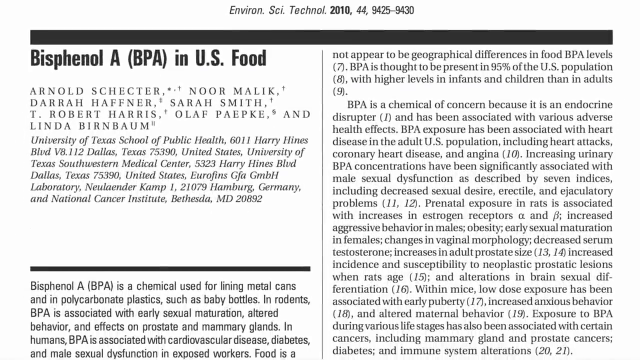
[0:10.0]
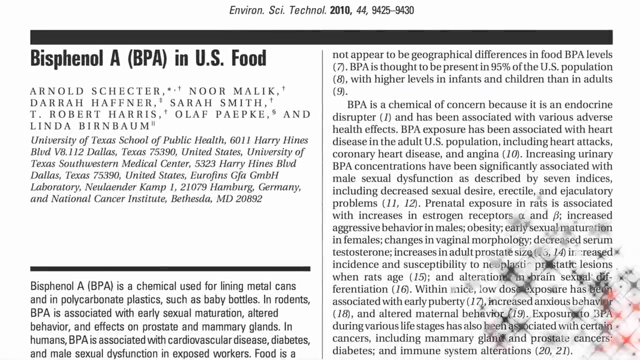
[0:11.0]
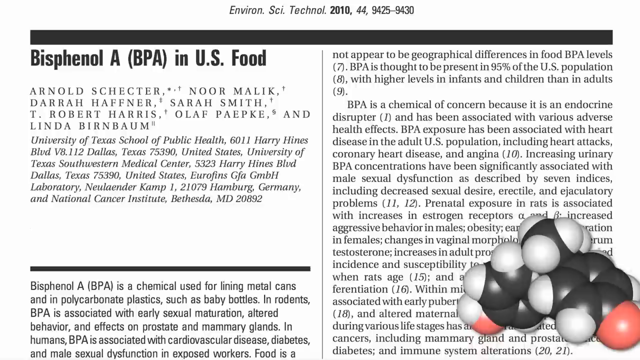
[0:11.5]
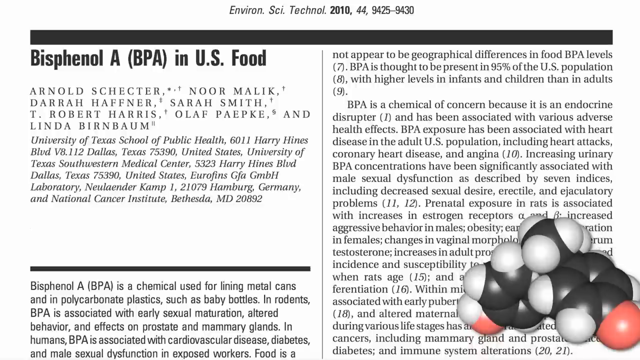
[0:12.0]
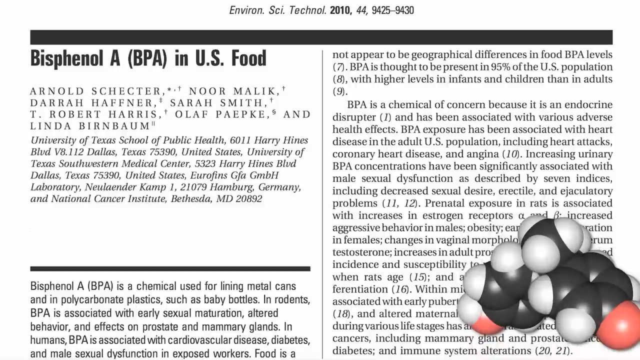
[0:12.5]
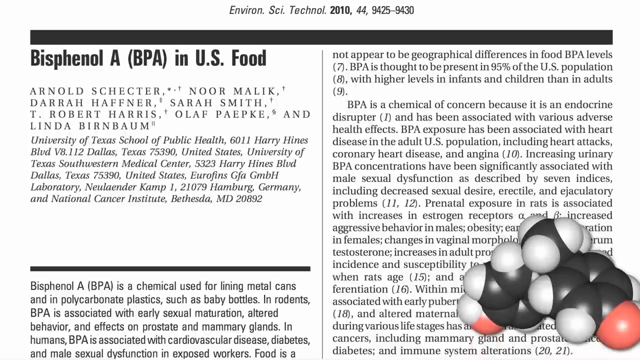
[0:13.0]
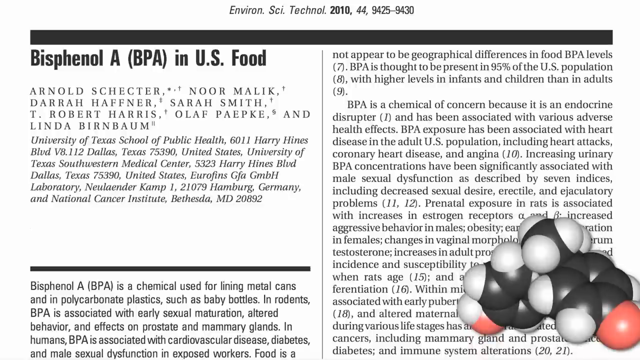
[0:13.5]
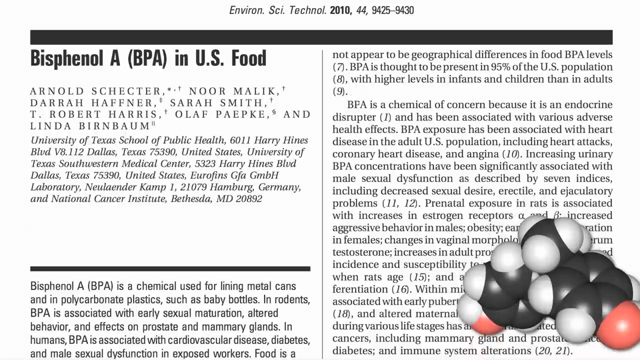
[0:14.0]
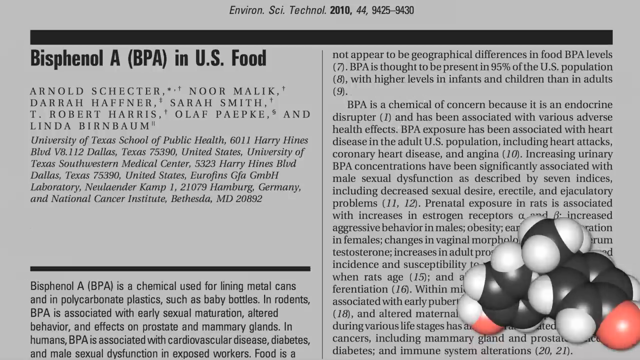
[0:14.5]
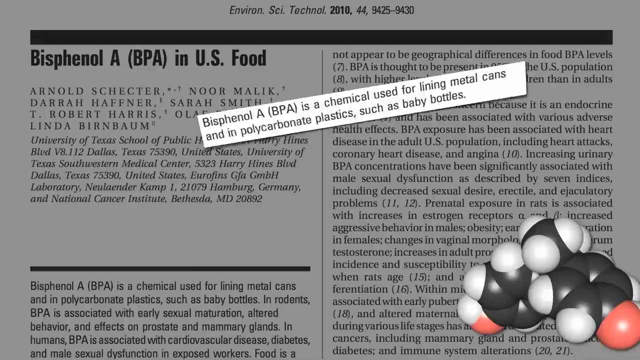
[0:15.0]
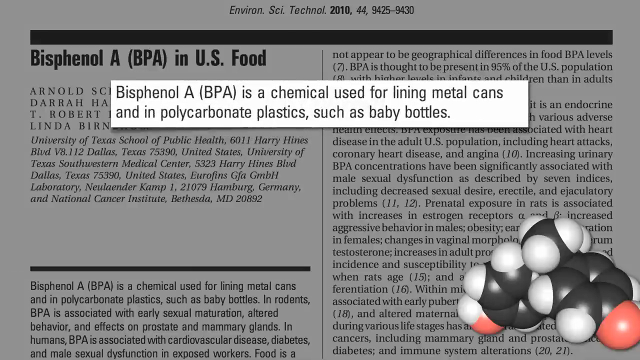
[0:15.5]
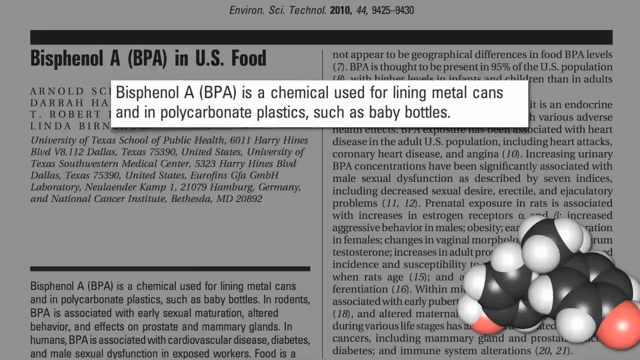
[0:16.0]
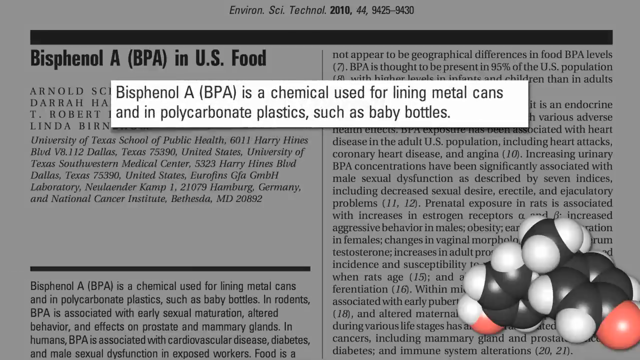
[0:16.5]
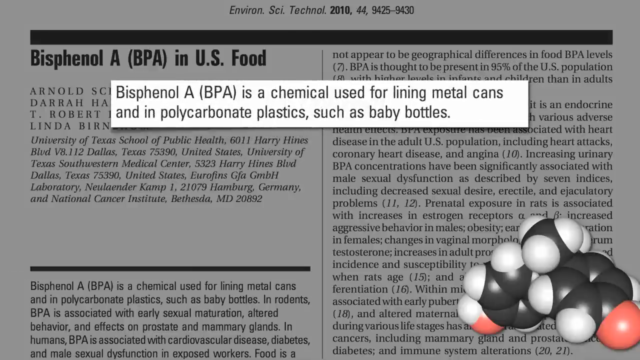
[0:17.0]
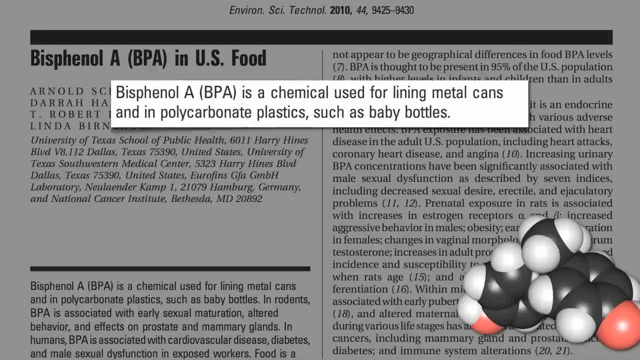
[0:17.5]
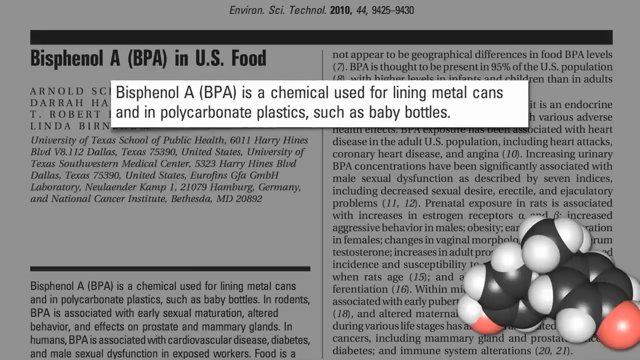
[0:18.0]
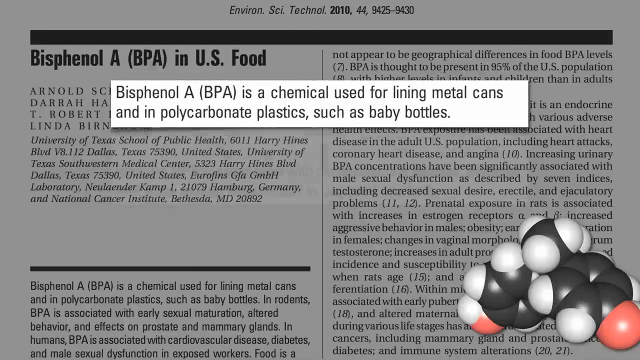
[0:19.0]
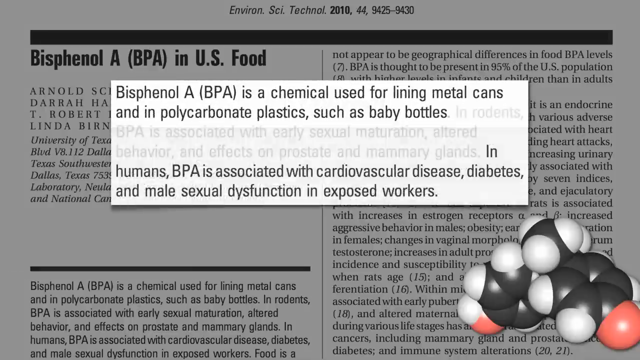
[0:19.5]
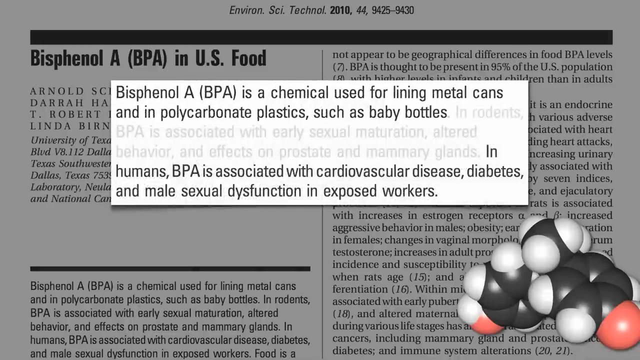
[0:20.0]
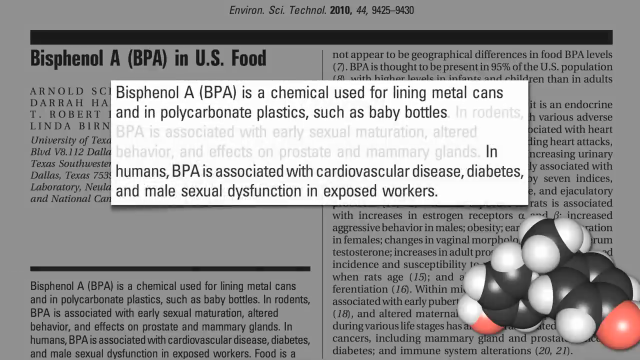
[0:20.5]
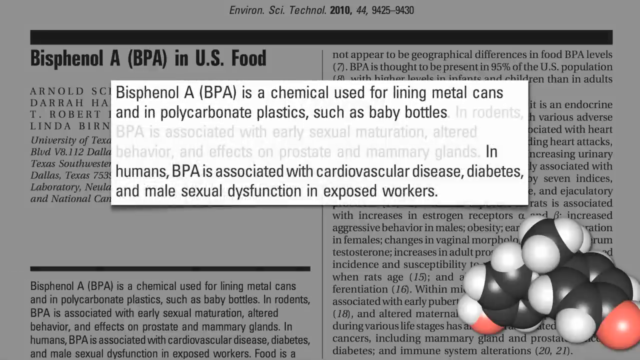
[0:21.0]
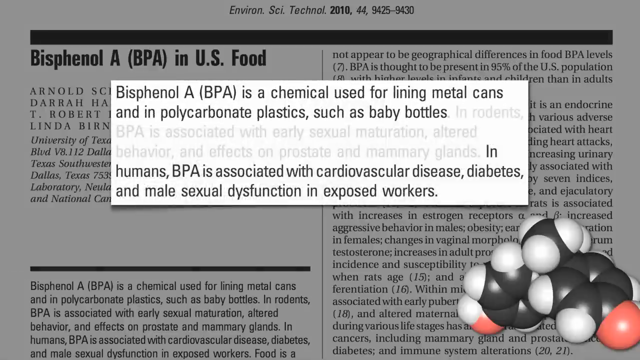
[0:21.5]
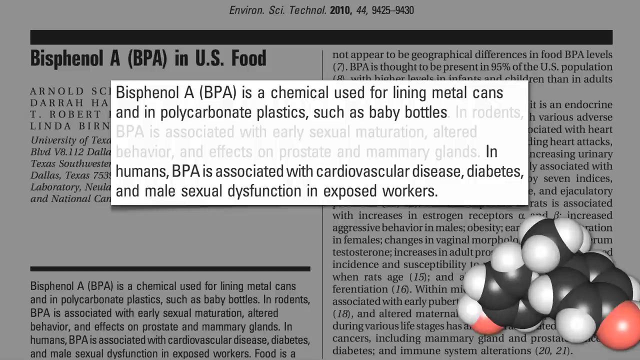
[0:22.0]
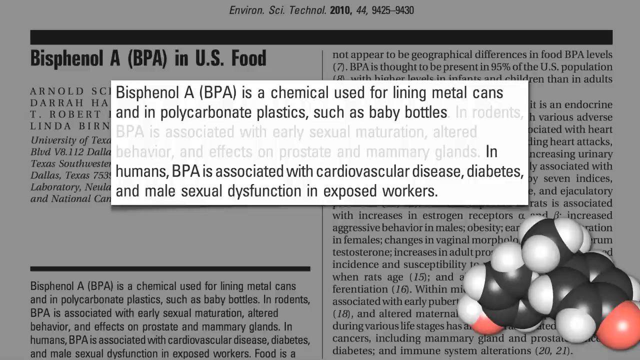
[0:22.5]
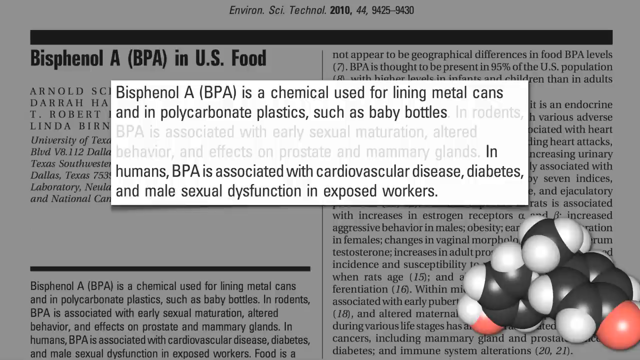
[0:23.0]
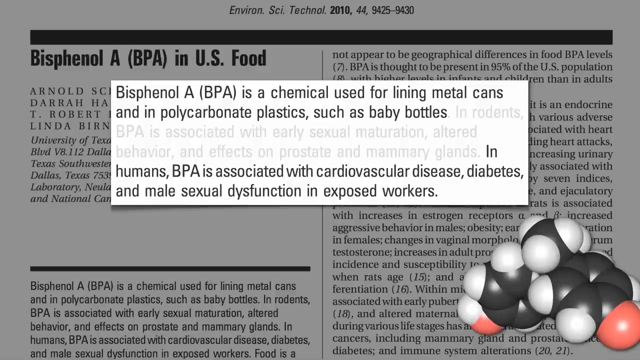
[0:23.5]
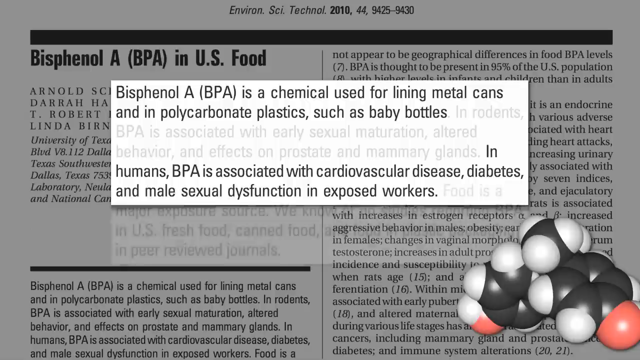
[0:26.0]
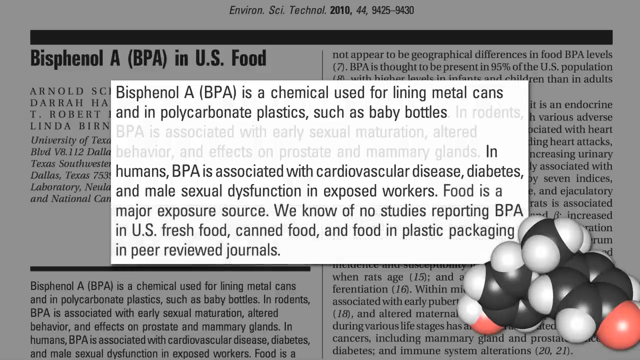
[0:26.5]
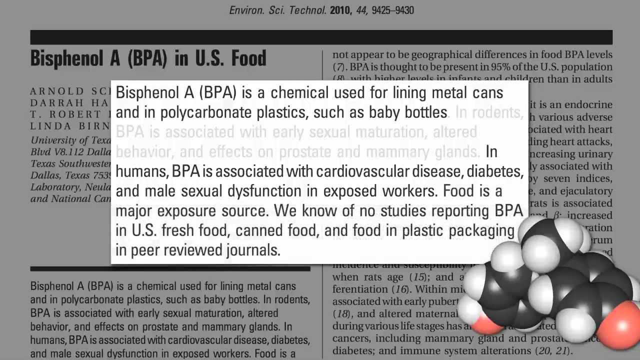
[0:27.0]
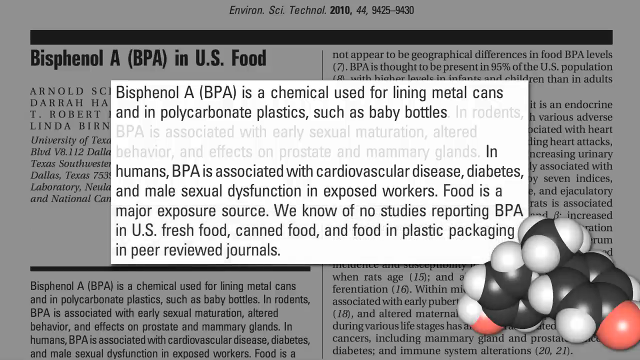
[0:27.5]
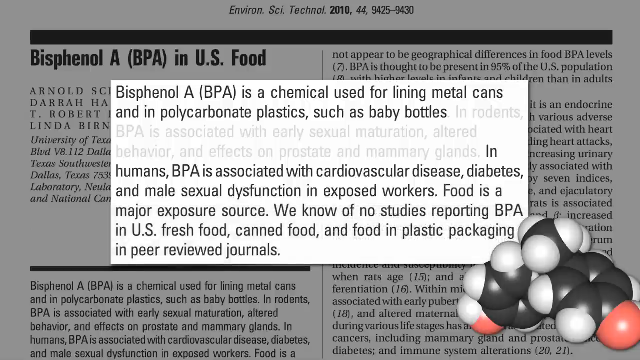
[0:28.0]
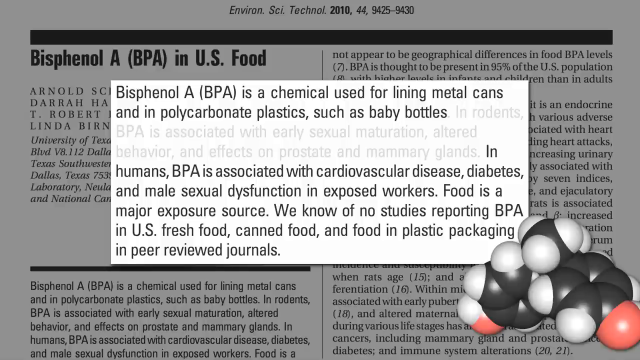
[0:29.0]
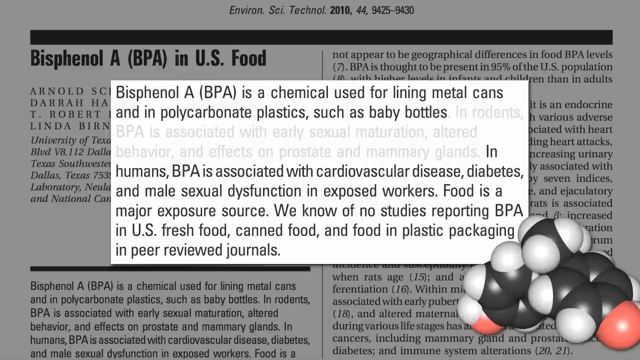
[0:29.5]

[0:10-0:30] What appears to be a research study is shown on a white background. At the top, tiny gray and black letters read "Environsci Technol 2010 44 9425-9430". Under that is a black bar, and black letters read "bisphenol A BPA in US food". Beneath are many names, apparently of the researchers, then information about where the study is from, and then the research study itself. Suddenly a group of 3D shapes, almost like atoms or molecules, in black and white, appears in the lower right-hand corner. Part of the study then comes forward onto the screen in its own box, reading "Bisphenol A BPA is a chemical used for lining metal cans and in polycarbonate plastics such as baby bottles". It stays on this for a little while, then the box expands to add "In rodents BPA is associated with early sexual maturation altered behavior and effects on prostate and mammary glands in humans BPA is associated with cardiovascular disease diabetes and male sexual dysfunction in exposed workers". After a pause it expands further to add "Food is a major exposure source we know of no studies reporting BPA in US fresh food canned food and food and plastic packaging in peer-reviewed journals", and stays on this for a little while as well.